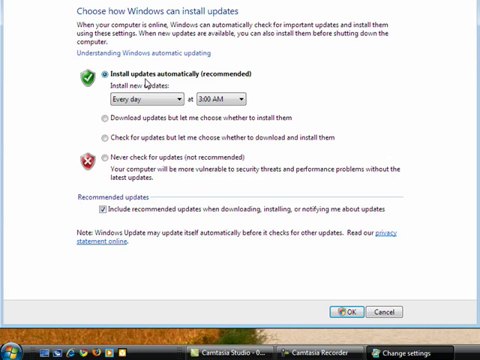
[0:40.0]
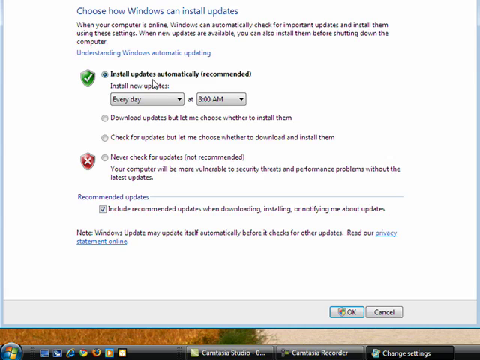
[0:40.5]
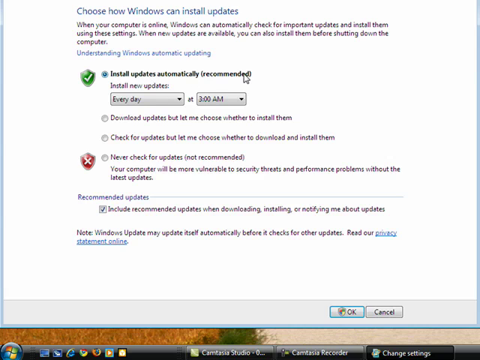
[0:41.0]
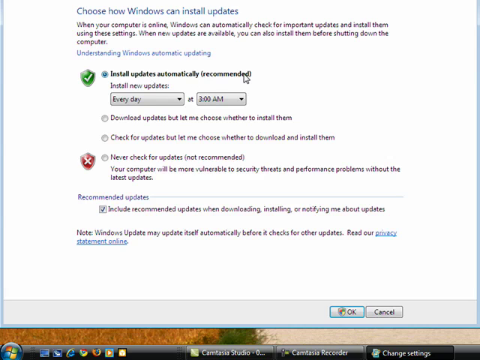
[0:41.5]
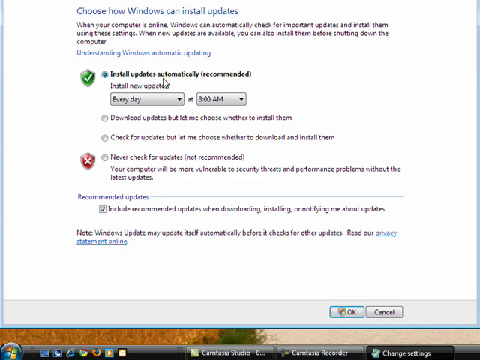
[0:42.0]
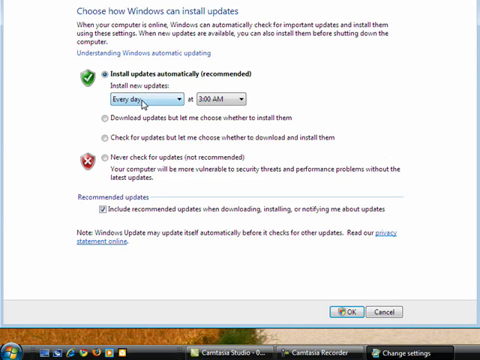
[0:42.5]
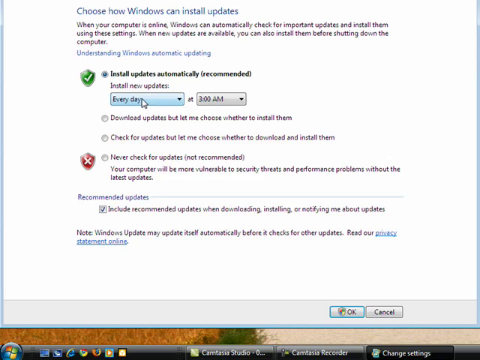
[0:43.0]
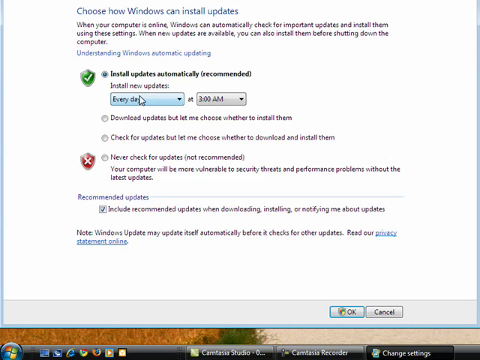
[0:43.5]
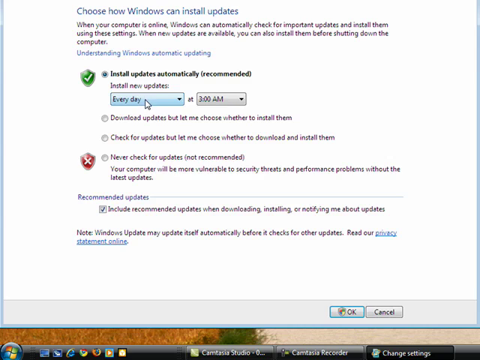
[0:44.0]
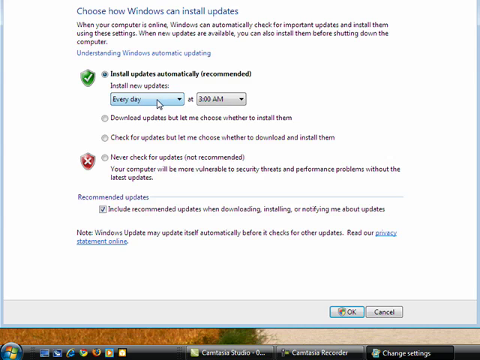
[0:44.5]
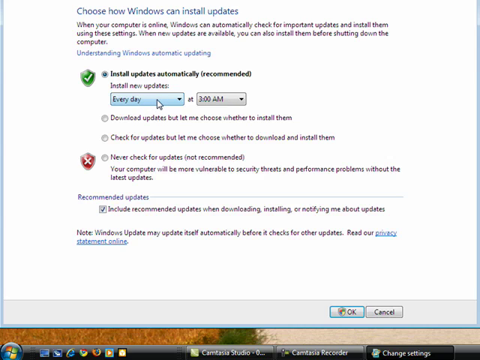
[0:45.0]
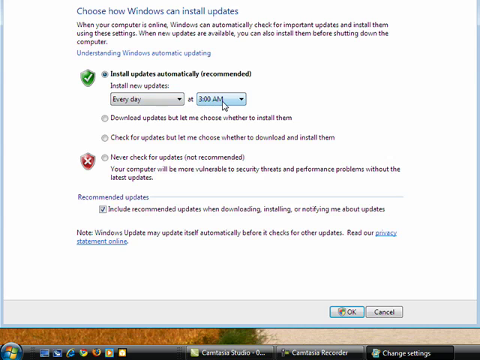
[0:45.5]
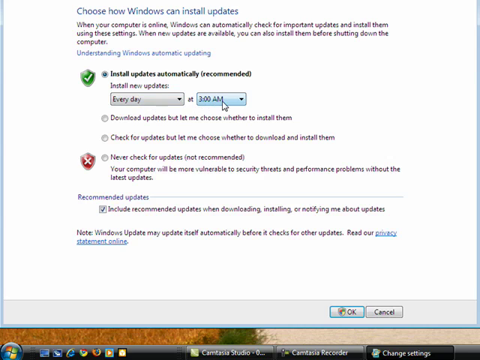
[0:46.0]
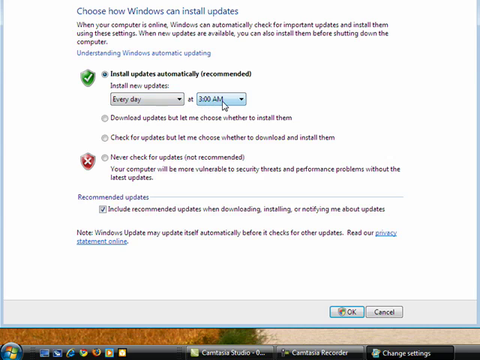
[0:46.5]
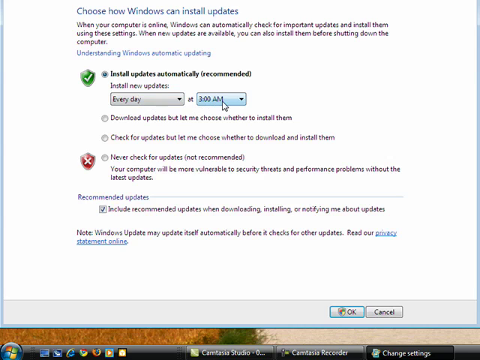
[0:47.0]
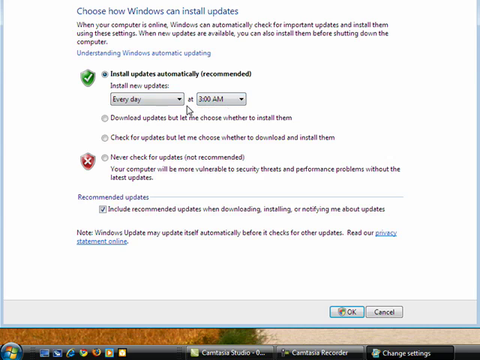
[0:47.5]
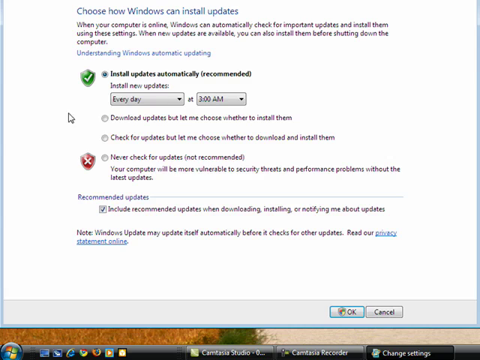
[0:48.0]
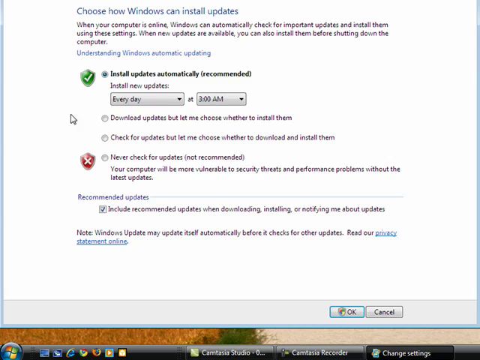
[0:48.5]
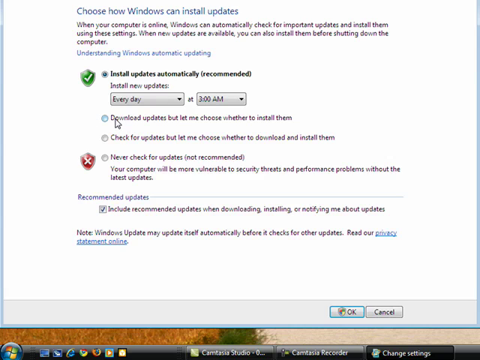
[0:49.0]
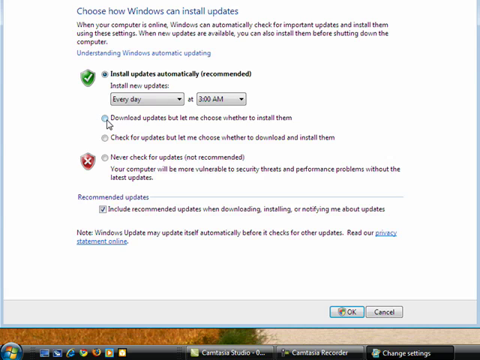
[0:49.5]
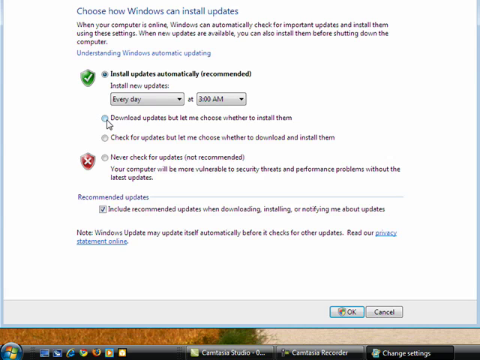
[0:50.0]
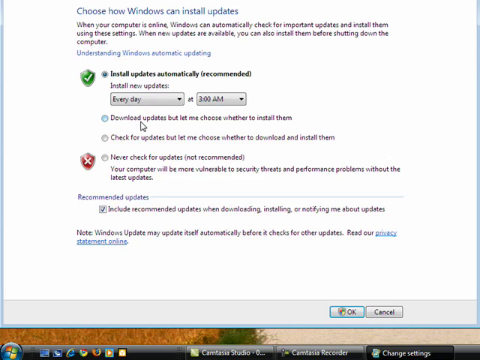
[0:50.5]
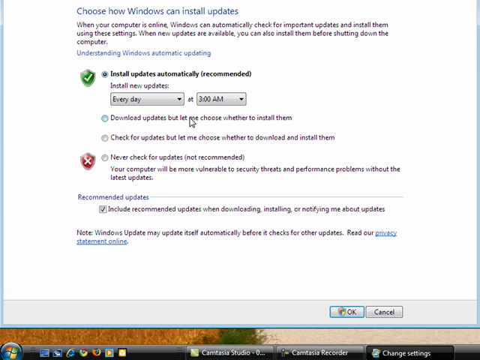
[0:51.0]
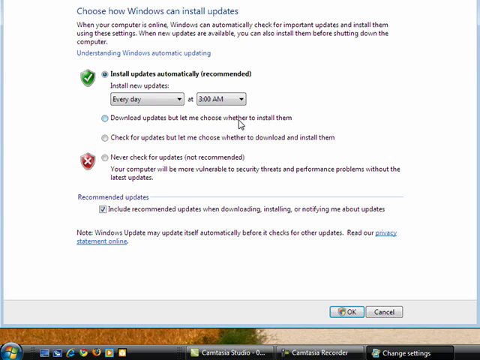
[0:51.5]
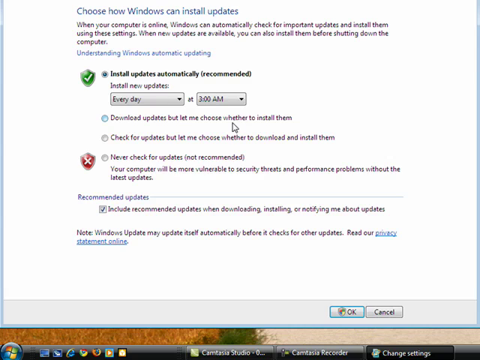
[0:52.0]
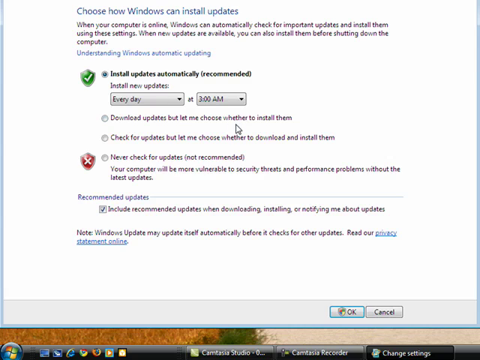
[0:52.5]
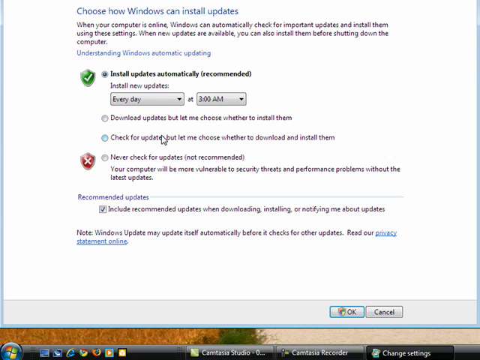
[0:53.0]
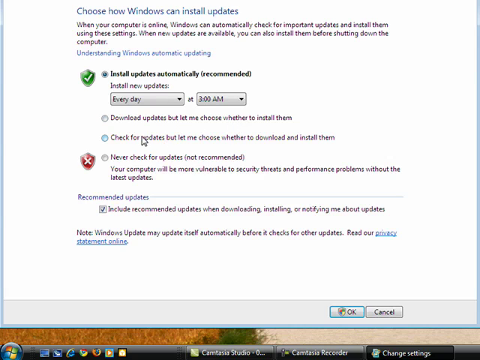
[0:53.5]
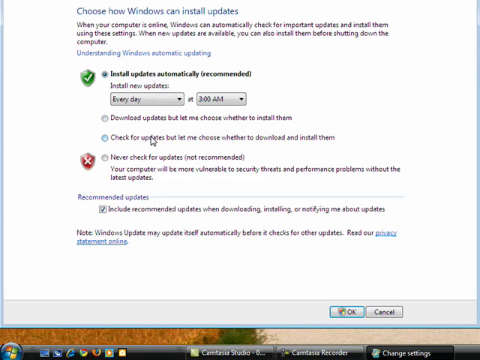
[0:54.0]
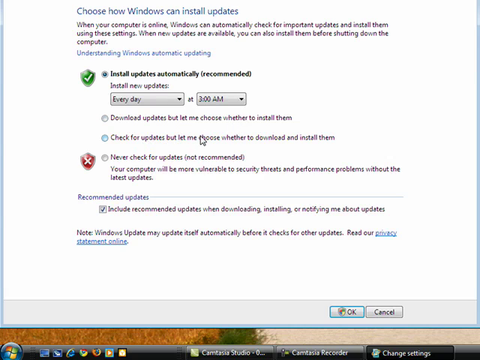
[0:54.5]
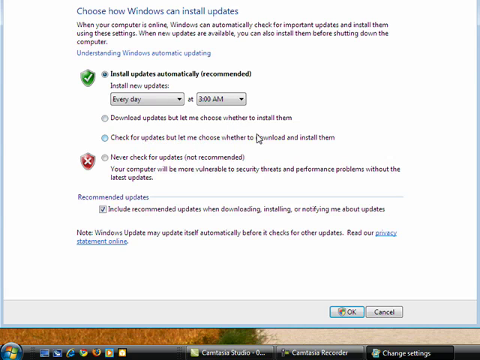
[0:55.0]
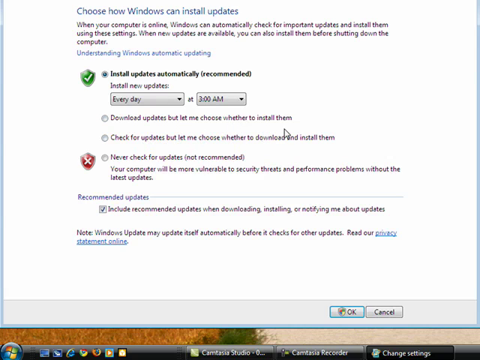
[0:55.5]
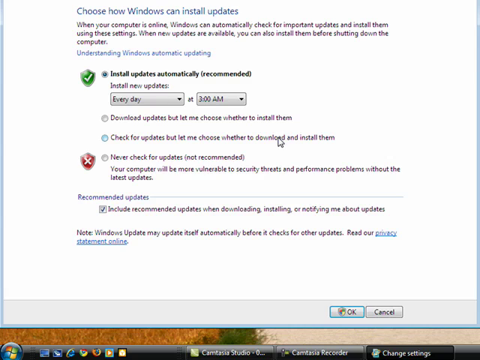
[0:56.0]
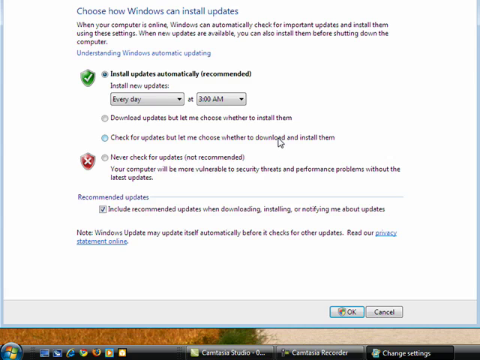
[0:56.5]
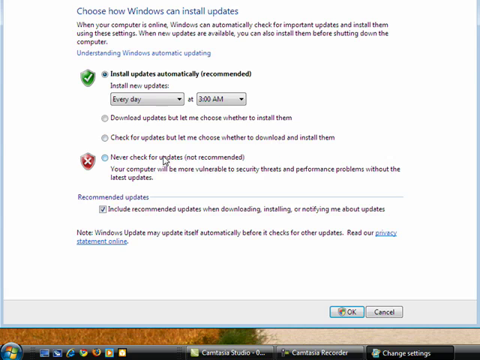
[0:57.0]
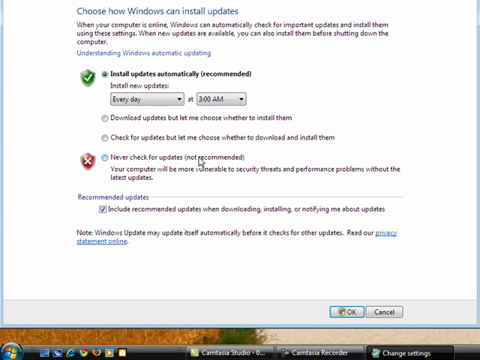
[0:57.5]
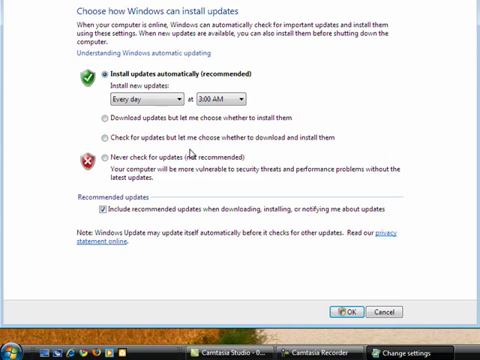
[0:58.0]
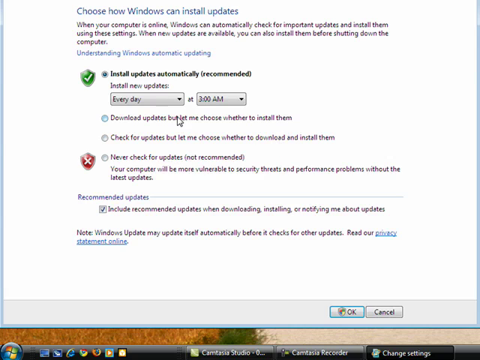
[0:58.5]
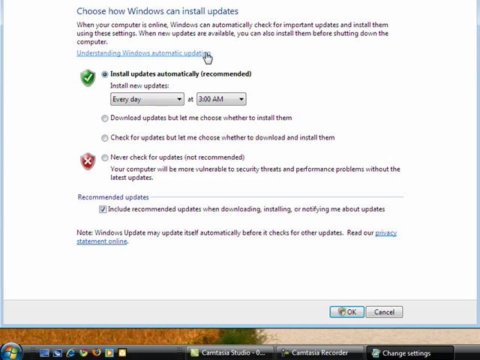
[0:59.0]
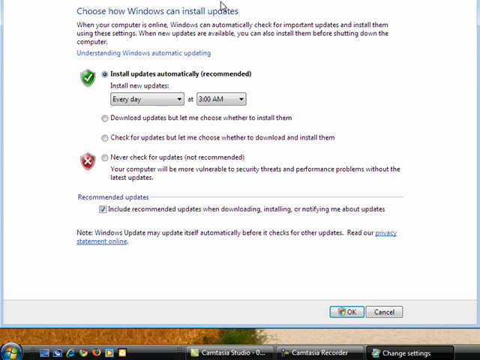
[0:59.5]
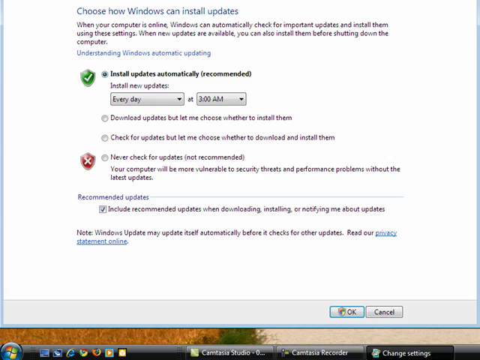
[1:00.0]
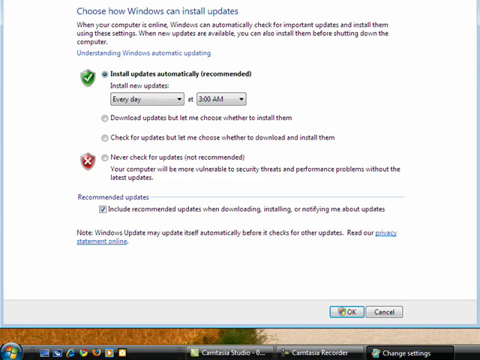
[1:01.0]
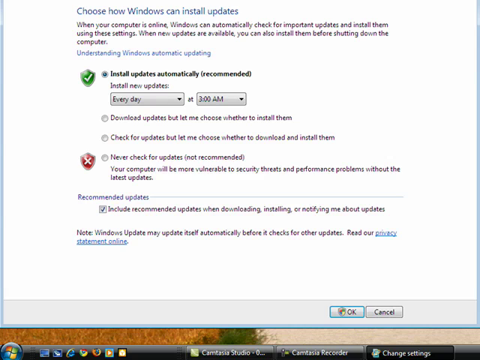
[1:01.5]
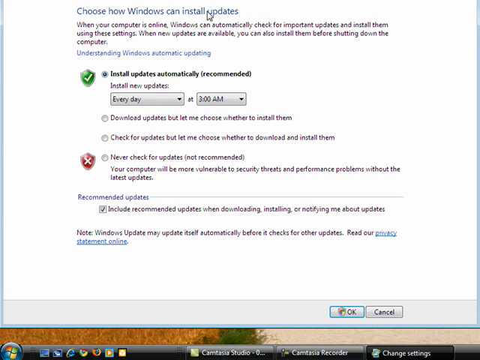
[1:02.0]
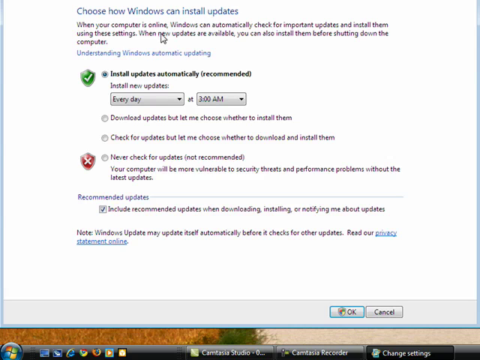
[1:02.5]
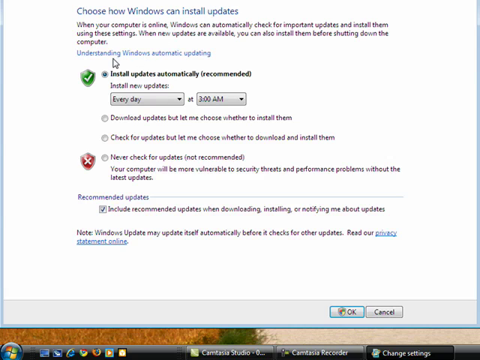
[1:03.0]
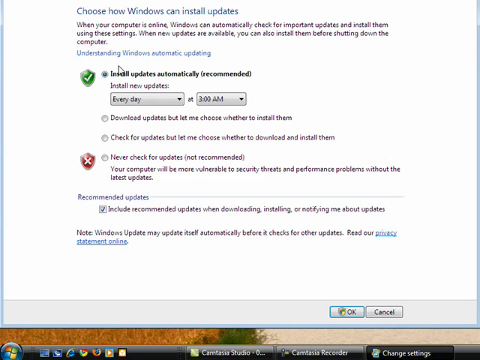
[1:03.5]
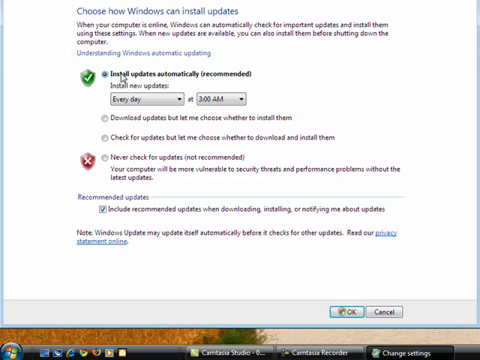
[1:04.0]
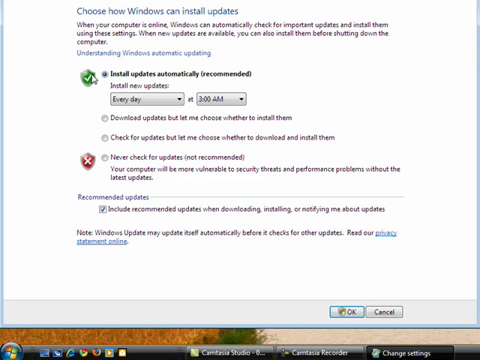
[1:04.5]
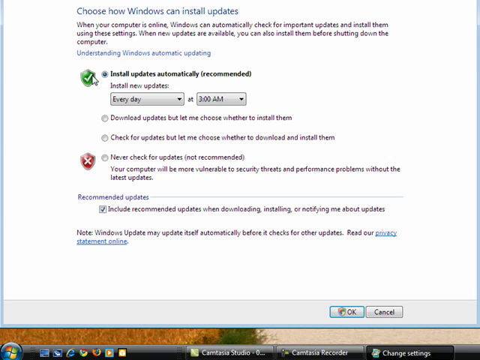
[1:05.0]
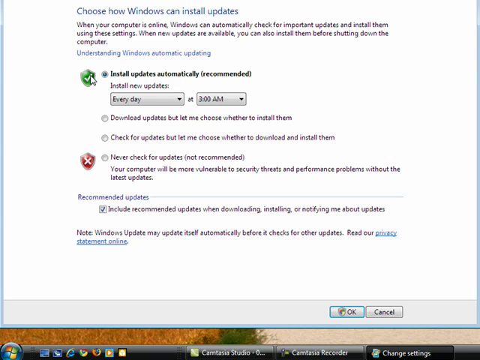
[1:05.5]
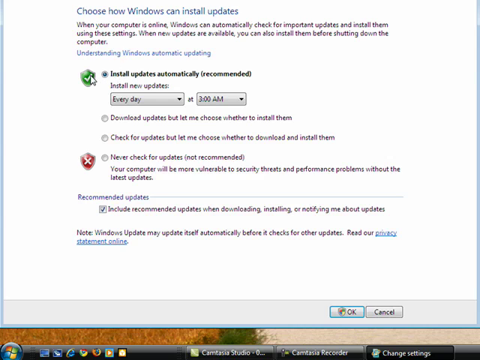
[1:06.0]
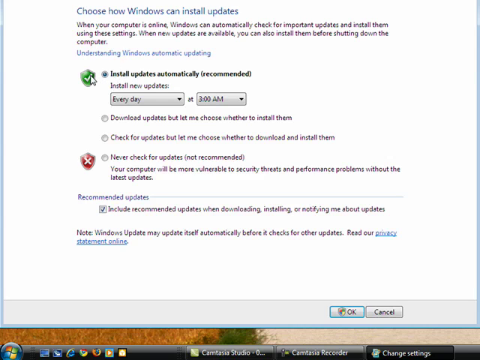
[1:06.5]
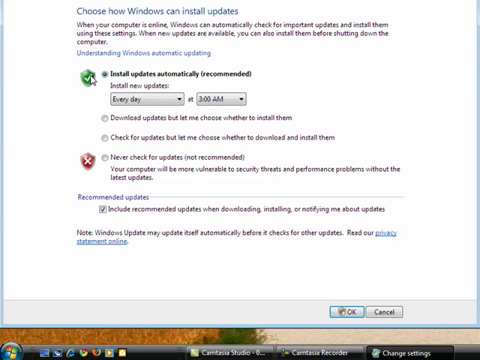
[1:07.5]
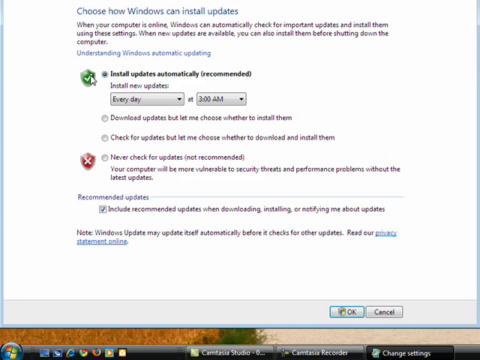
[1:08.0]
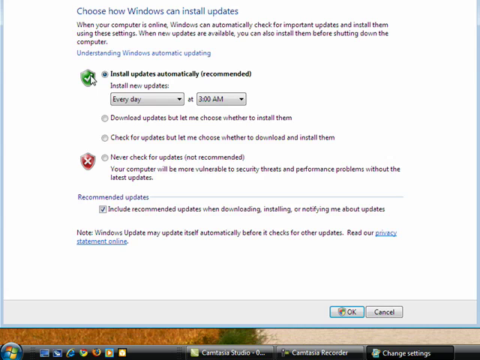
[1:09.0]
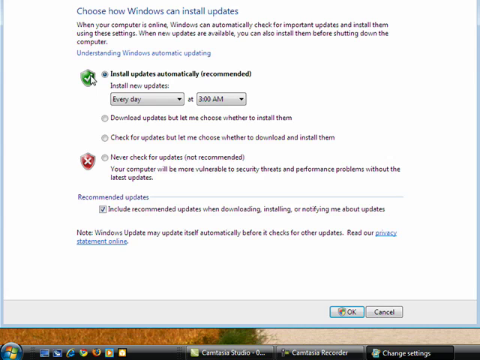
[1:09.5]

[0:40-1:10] The person is on the "Choose how Windows can install updates" screen. The screen shows that install updates automatically is checked, set to every day at 3 a.m. The person uses the mouse cursor to read through the different options on the screen. At the bottom, a box is checked to "include recommended updates when downloading, installing, or notifying me about updates." There is an option to "Never check for updates," marked as "not recommended." On the right-hand side at the bottom of the screen are an OK button and a Cancel button, and the person moves the cursor over these buttons as if about to choose one of them.